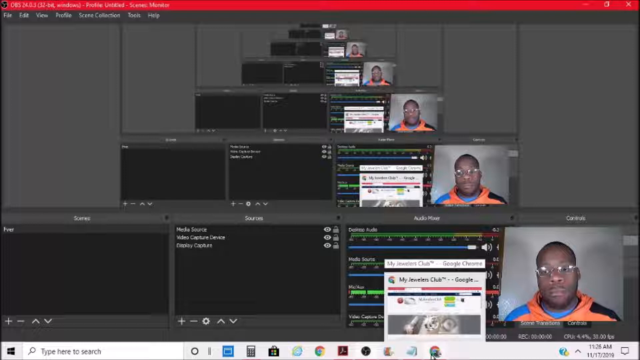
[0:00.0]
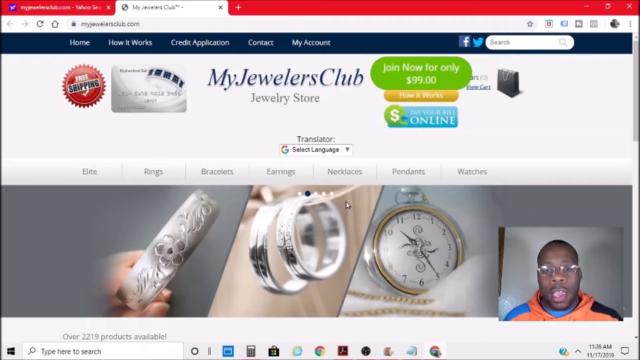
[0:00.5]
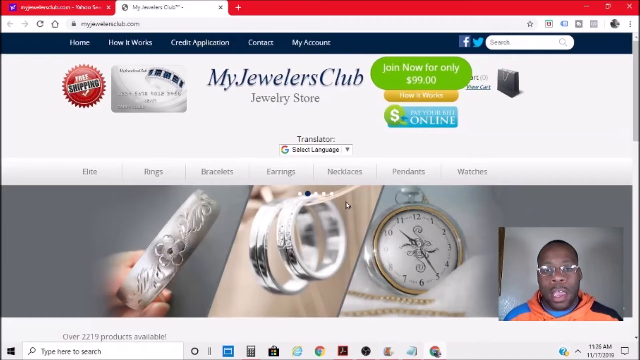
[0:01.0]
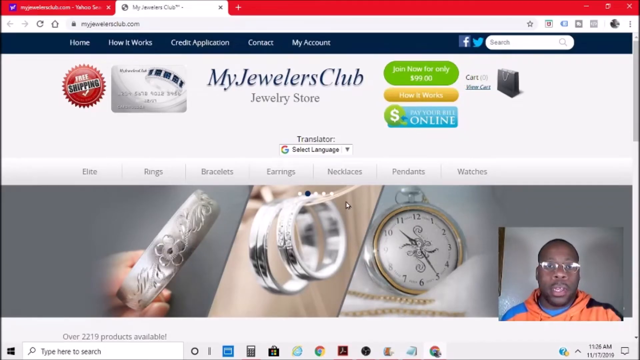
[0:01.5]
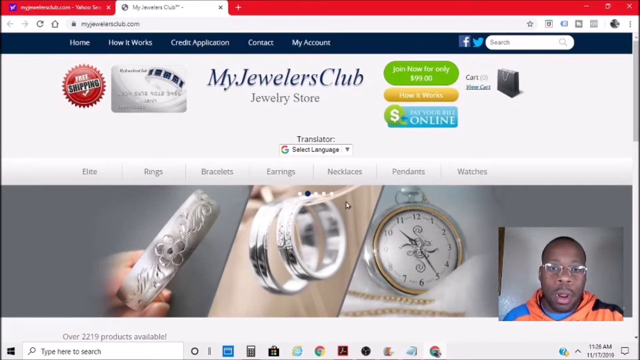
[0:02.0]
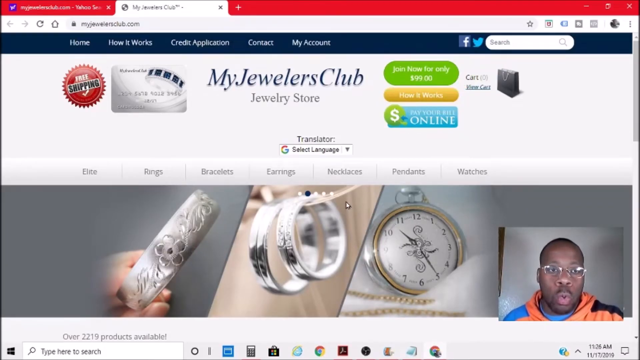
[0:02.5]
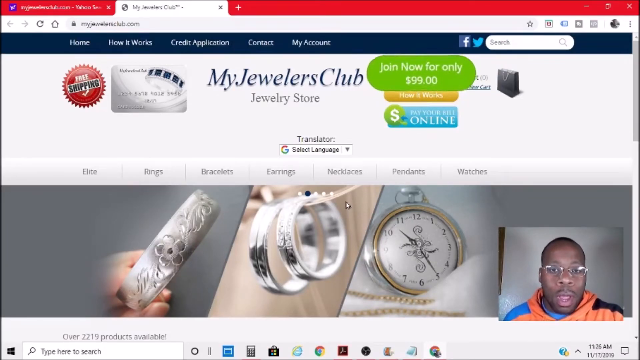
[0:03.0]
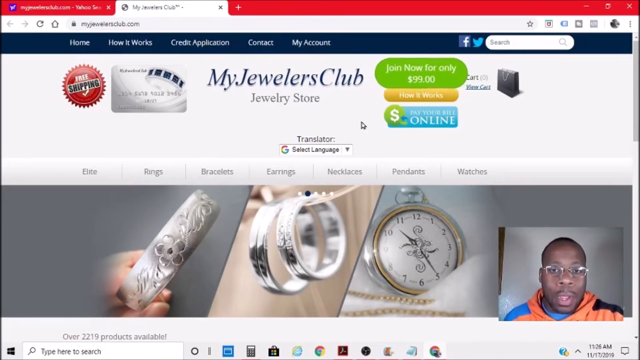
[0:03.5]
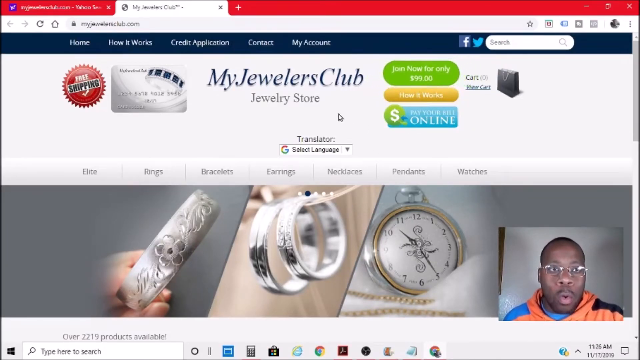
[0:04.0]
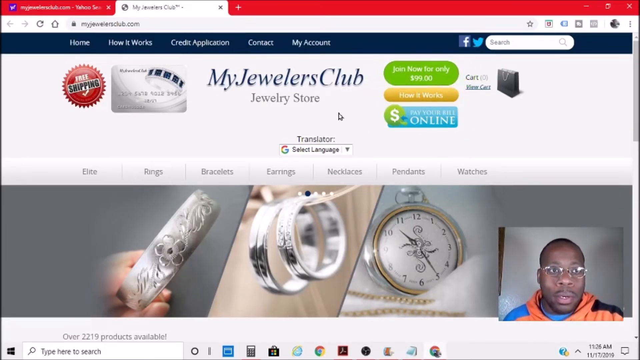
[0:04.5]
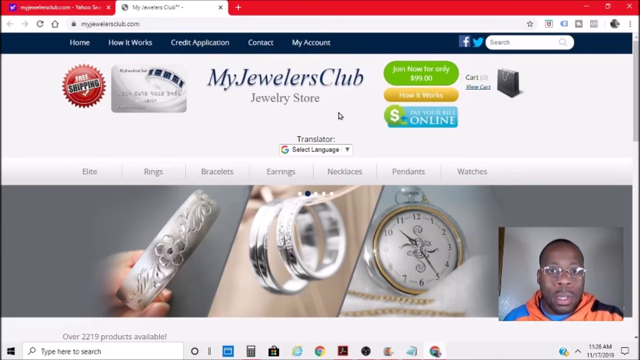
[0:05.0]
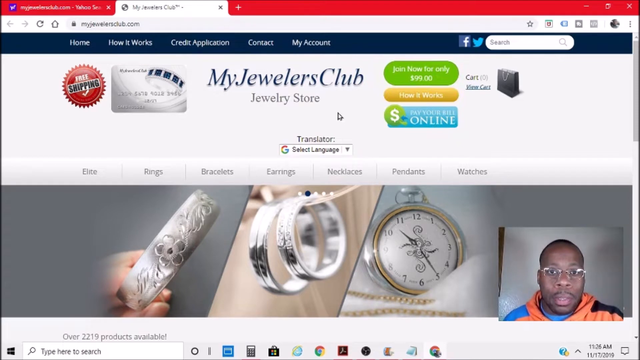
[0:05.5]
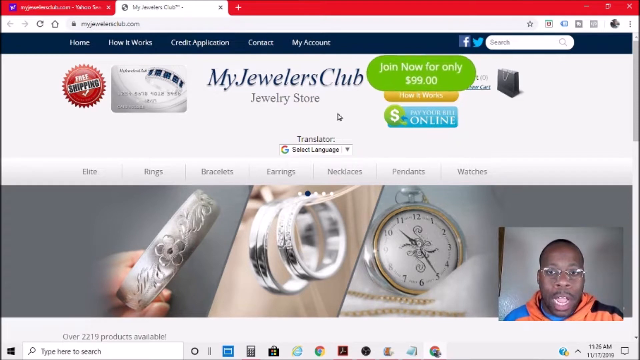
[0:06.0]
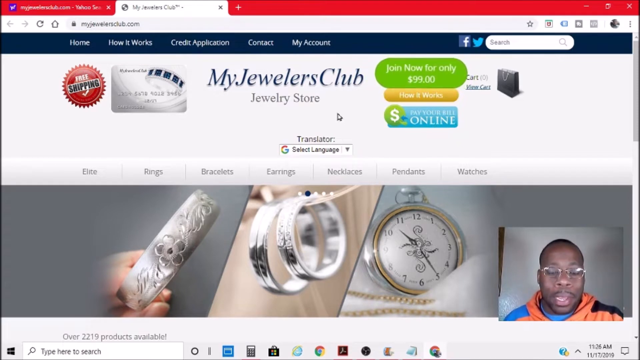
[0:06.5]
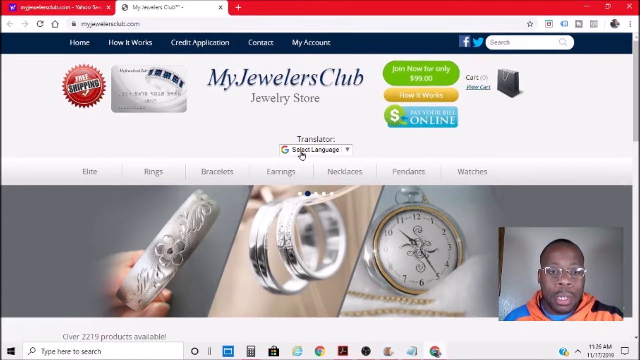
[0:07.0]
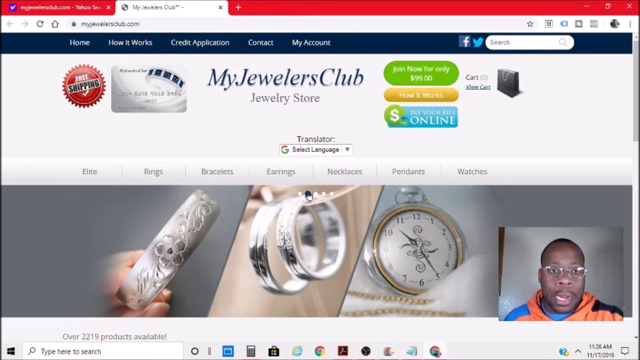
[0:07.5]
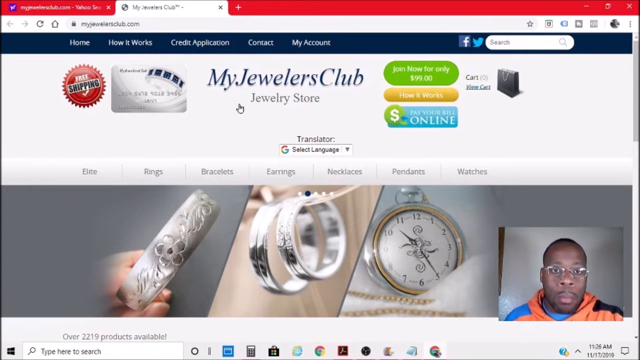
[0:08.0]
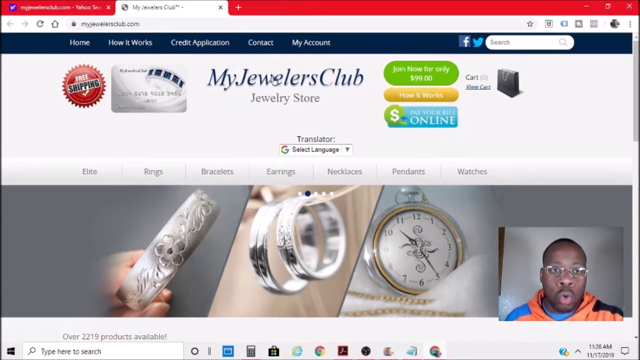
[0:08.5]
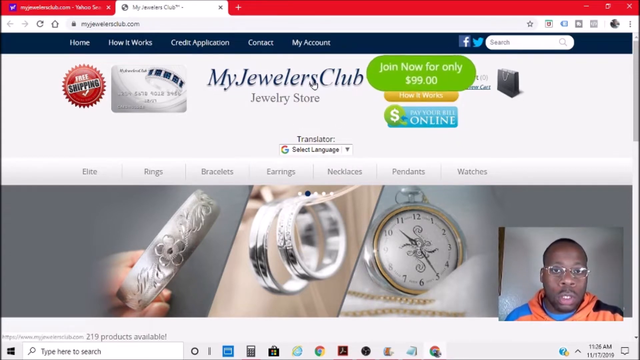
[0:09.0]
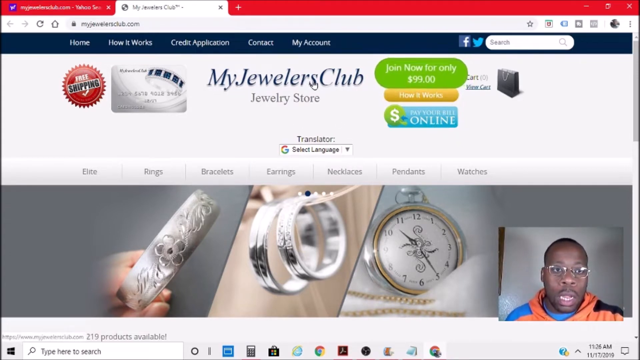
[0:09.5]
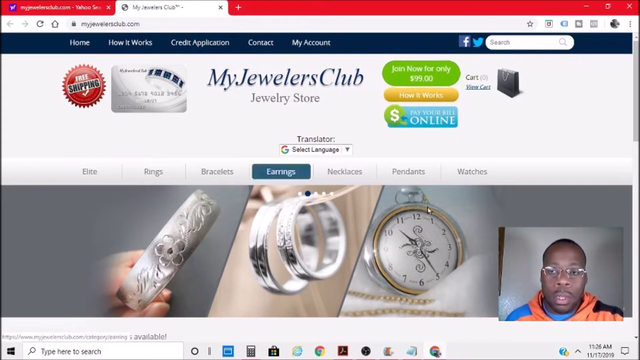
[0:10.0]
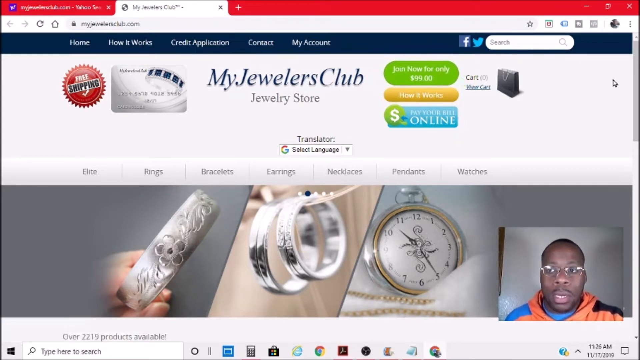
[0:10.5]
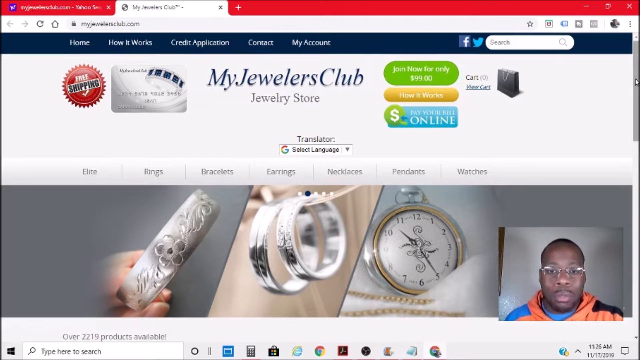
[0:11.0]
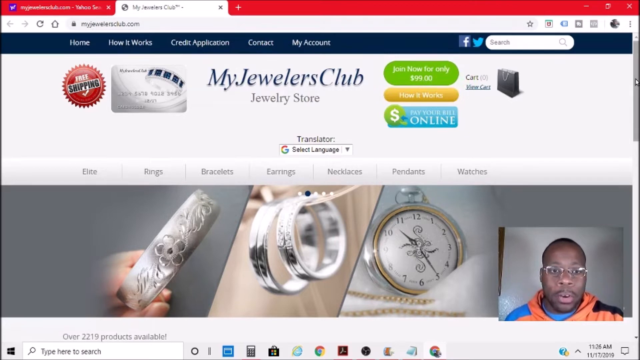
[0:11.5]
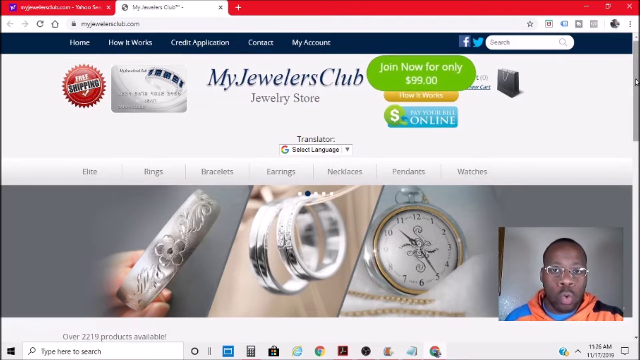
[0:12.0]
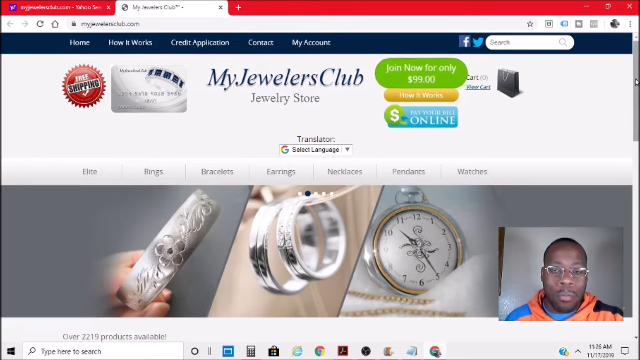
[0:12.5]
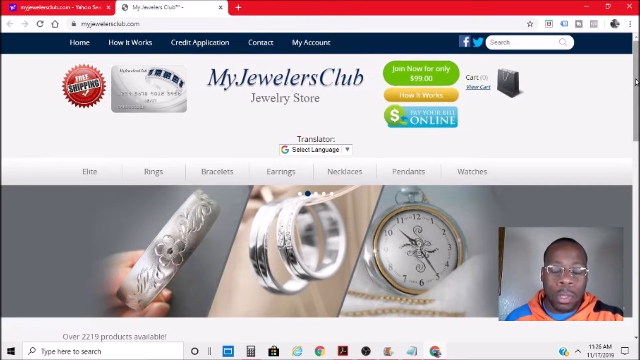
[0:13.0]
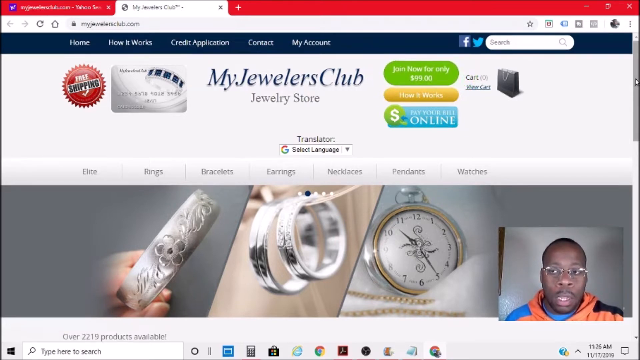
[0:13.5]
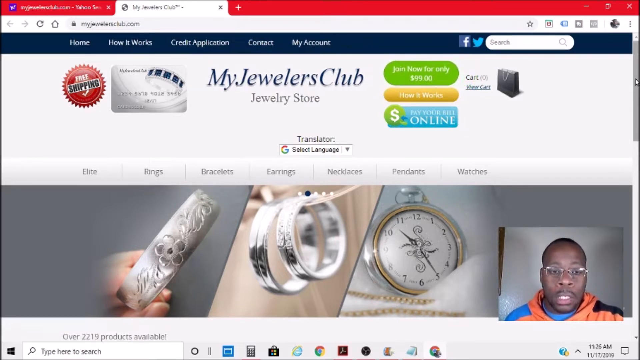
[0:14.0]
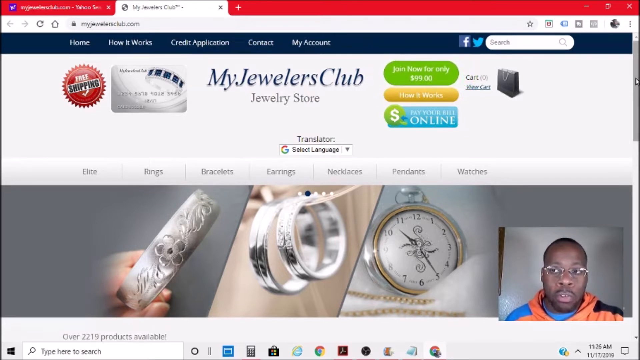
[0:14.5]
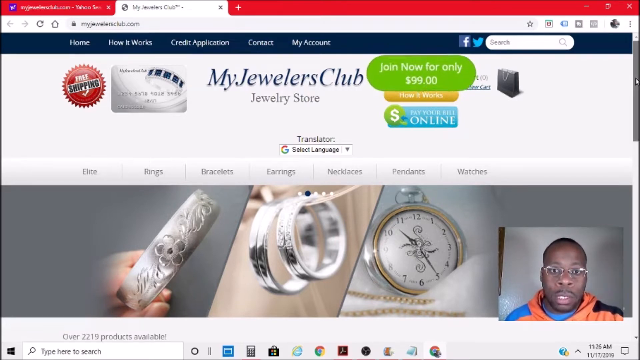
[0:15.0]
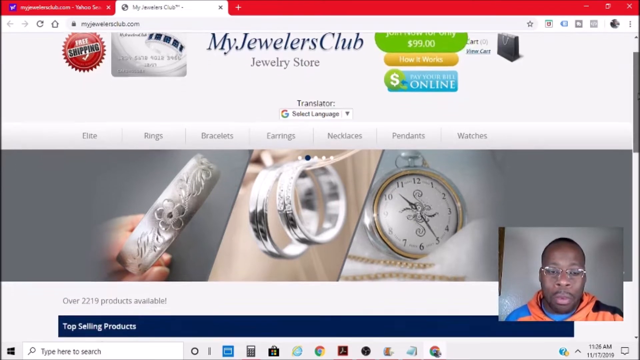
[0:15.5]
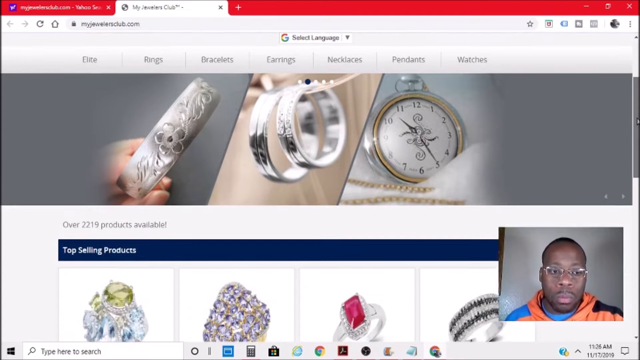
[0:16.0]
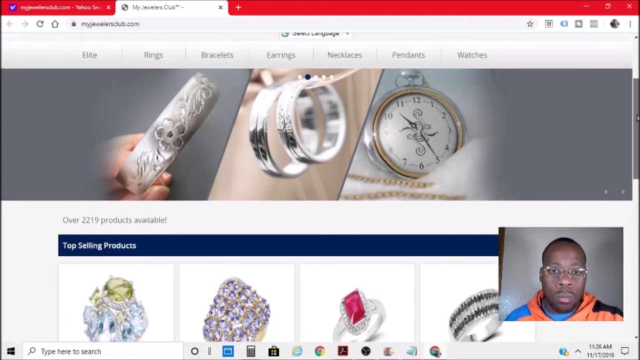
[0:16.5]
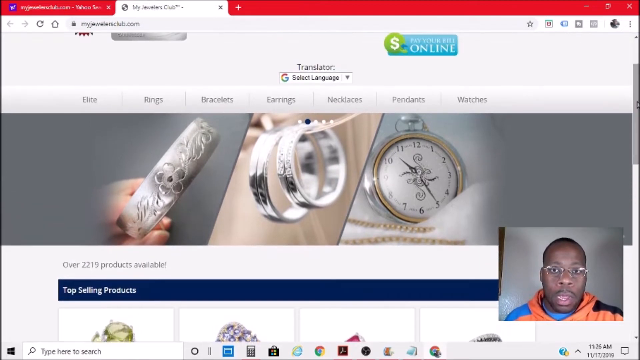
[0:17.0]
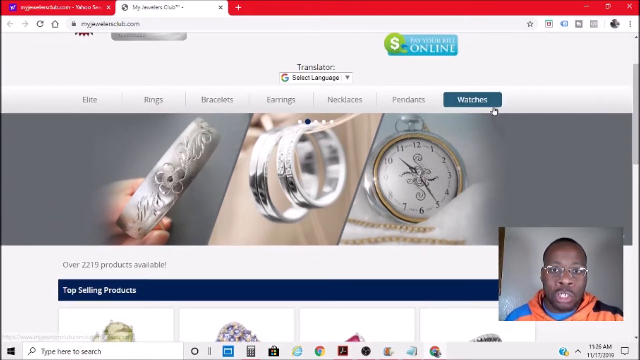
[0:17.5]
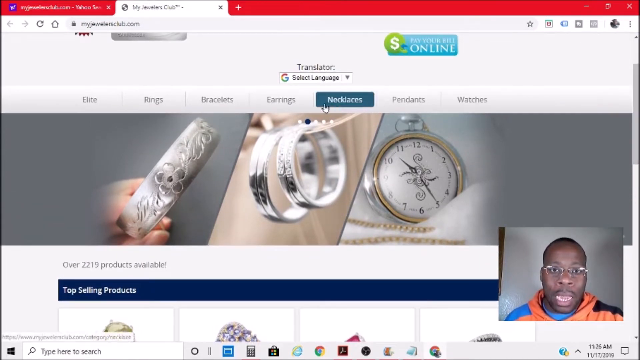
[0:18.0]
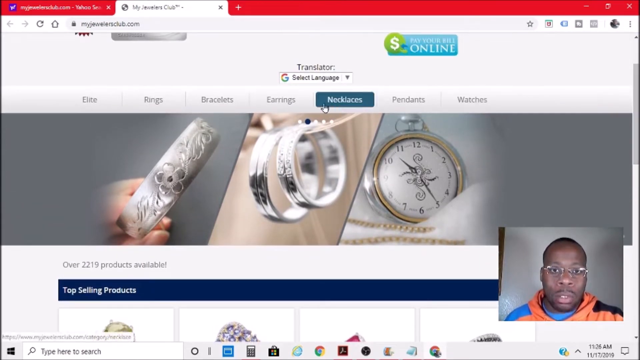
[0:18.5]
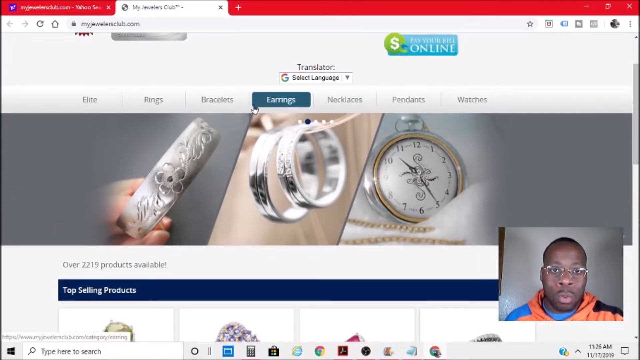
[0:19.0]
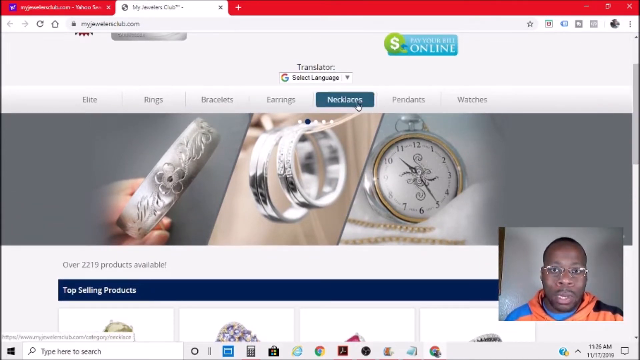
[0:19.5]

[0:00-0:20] The video shows "my jewelers club" with a picture of some jewelry on a large screen. It is a website open in a browser, searched for by someone, with the browser at the top of the page and a live cursor being worked. A man speaks in the lower right-hand corner; he is a black man with glasses and an orange sweatshirt. Pop-ups appear at the top. Someone moves the cursor back and forth horizontally across the screen. Several screens then appear that go completely across from left to right at the front and get smaller toward the back. Someone clicks on things, including "join now for only $99", then scrolls up the screen, where more top picks are visible.